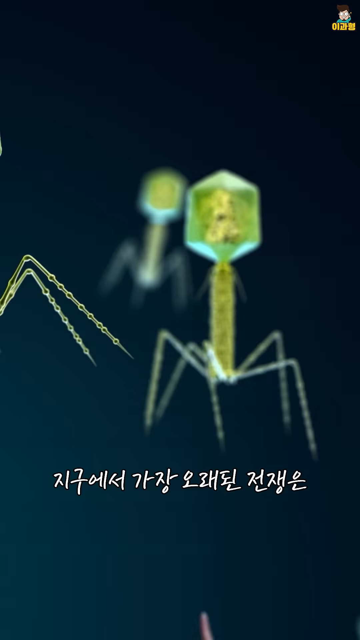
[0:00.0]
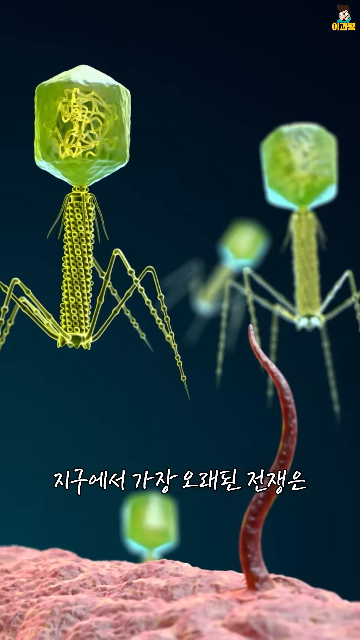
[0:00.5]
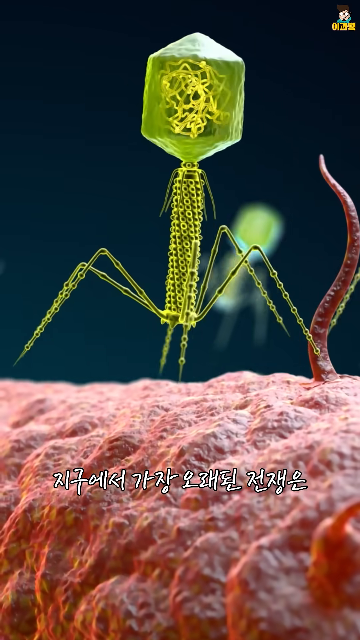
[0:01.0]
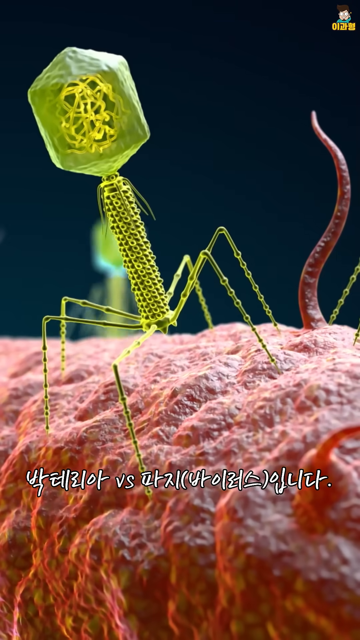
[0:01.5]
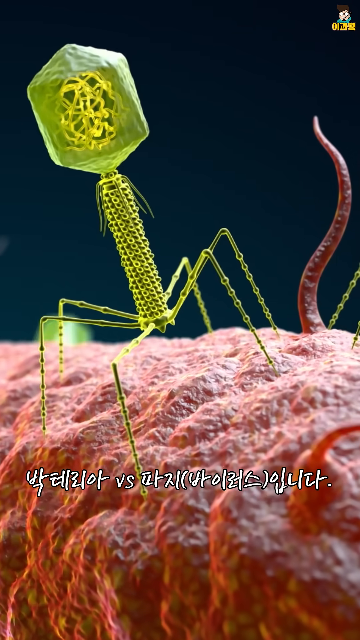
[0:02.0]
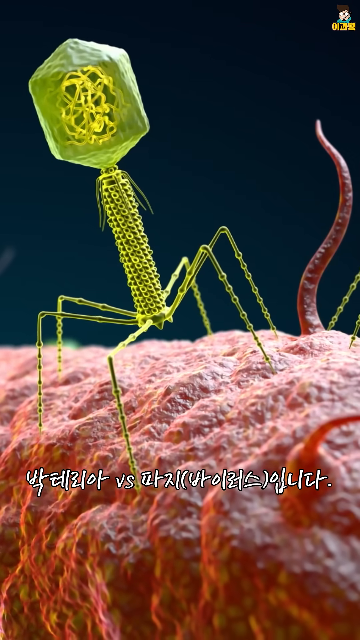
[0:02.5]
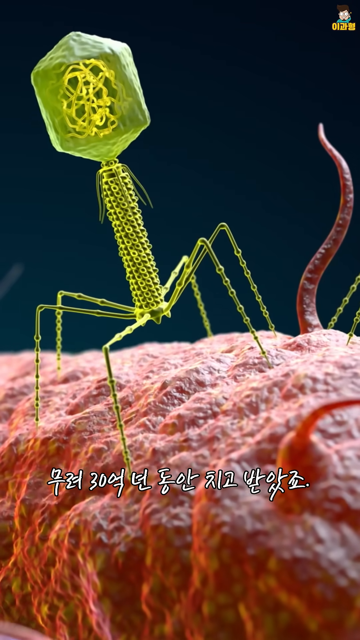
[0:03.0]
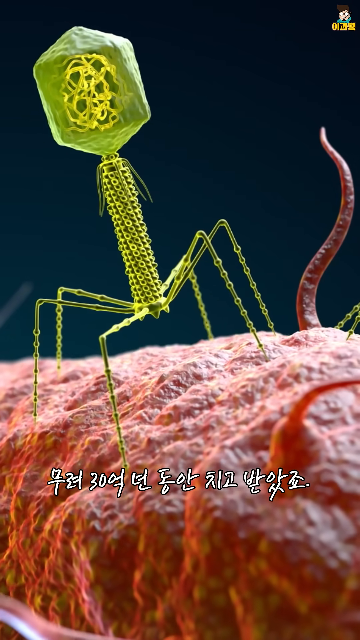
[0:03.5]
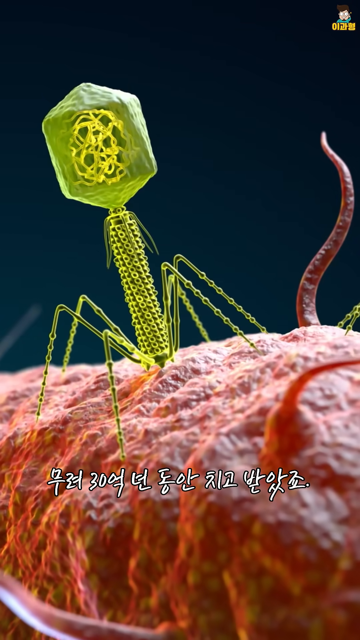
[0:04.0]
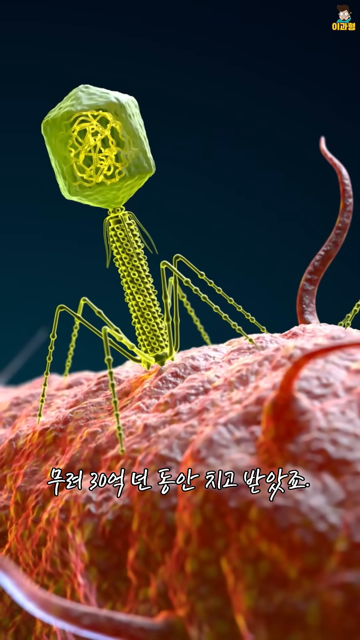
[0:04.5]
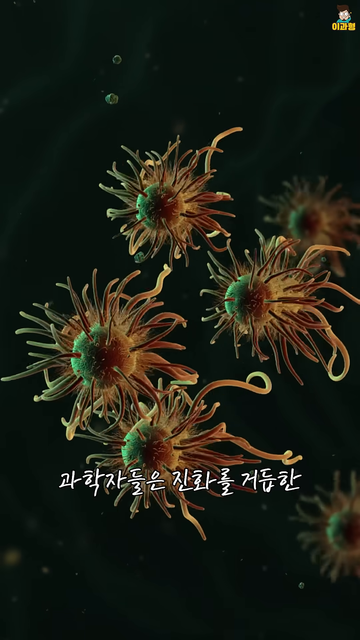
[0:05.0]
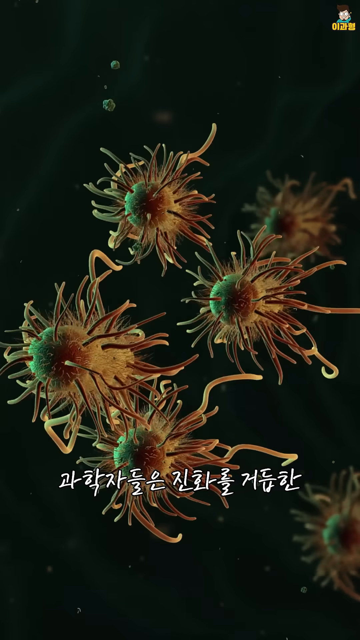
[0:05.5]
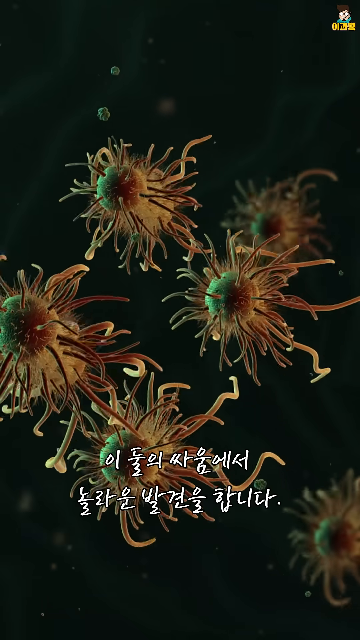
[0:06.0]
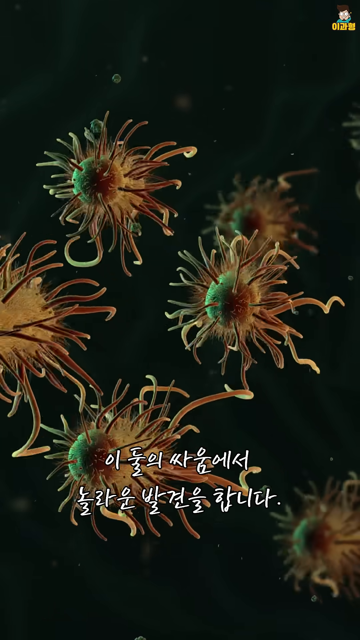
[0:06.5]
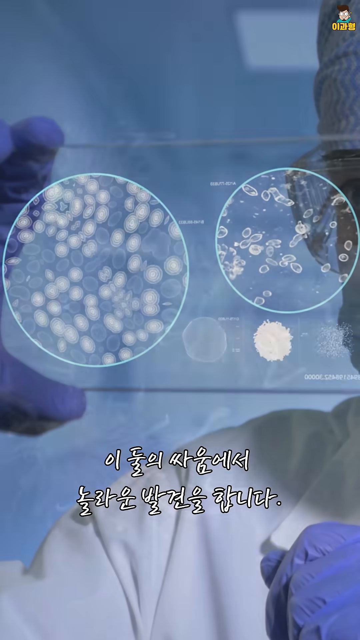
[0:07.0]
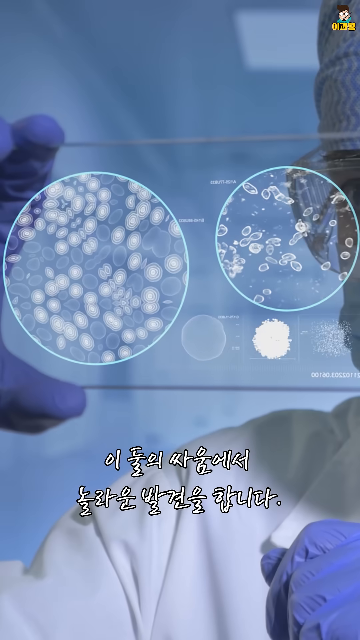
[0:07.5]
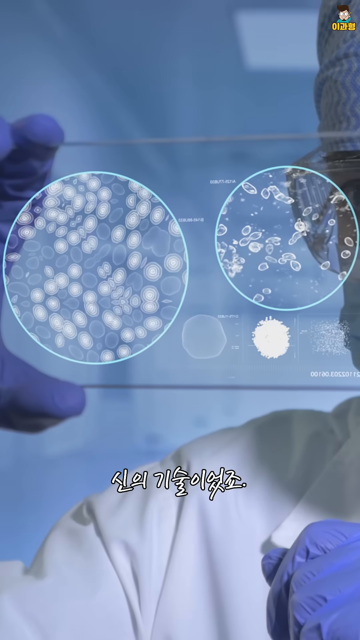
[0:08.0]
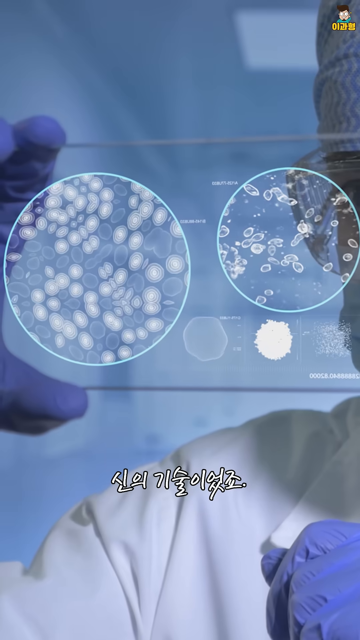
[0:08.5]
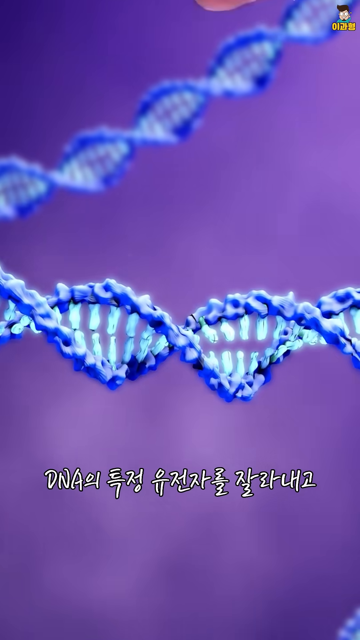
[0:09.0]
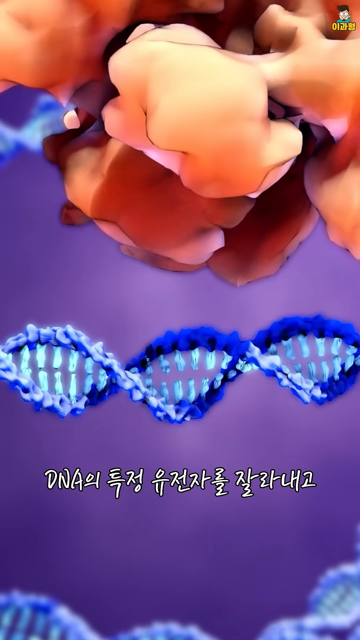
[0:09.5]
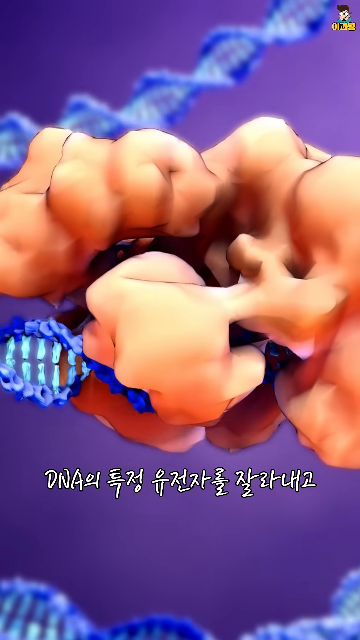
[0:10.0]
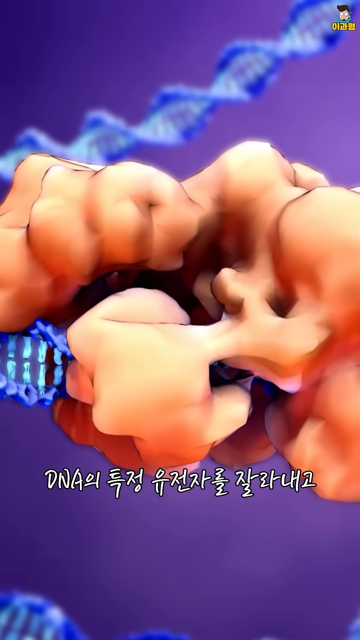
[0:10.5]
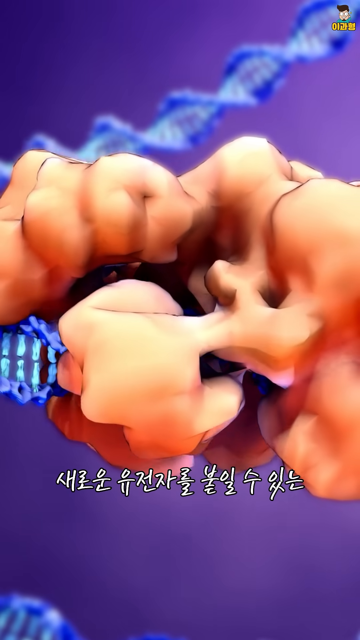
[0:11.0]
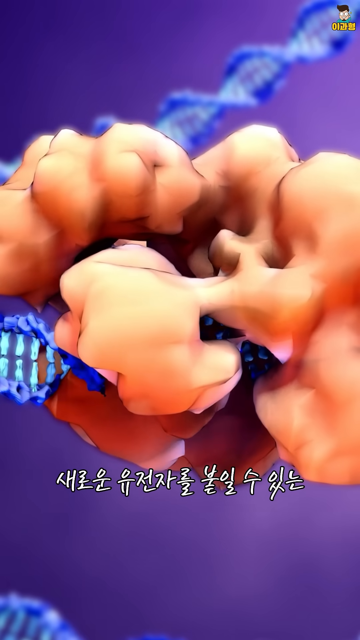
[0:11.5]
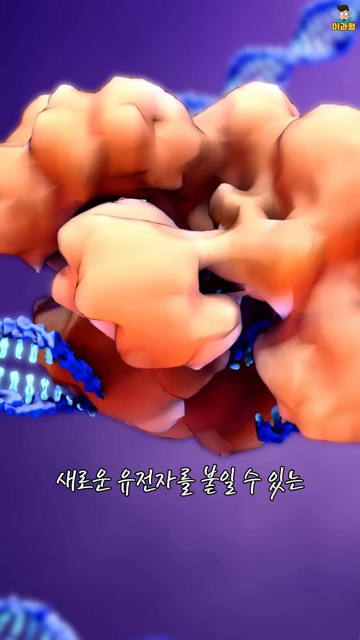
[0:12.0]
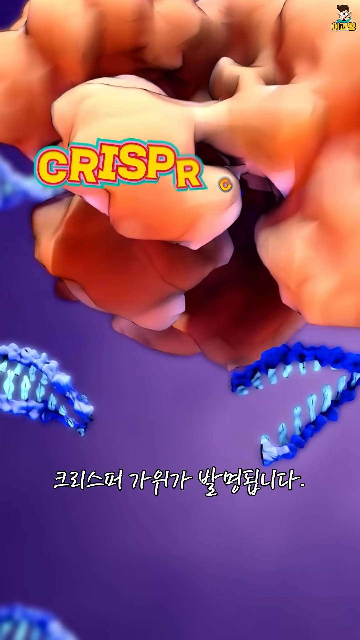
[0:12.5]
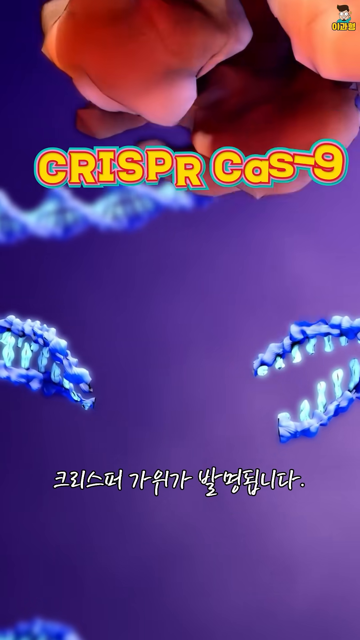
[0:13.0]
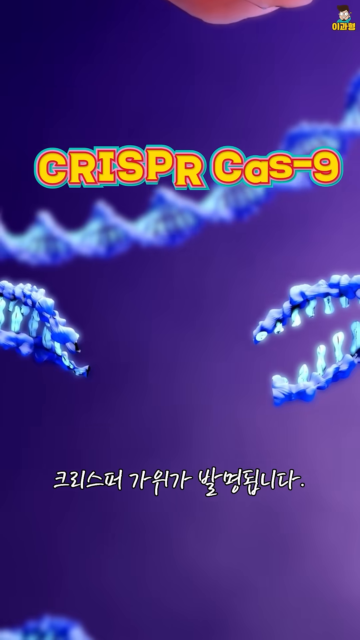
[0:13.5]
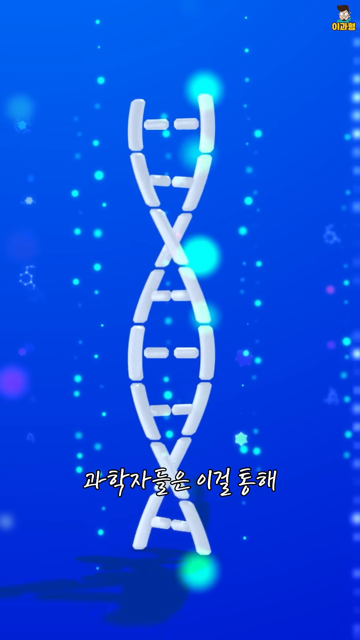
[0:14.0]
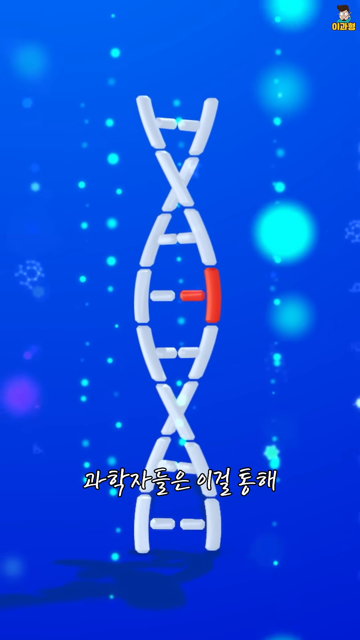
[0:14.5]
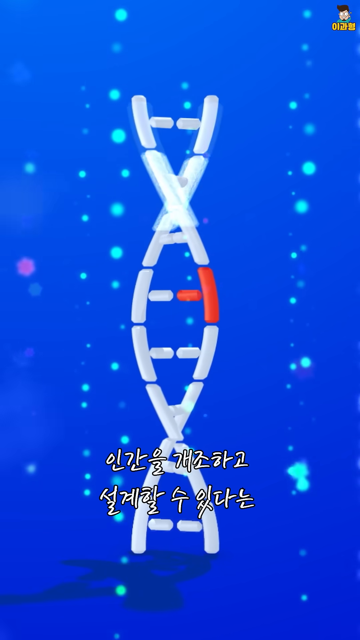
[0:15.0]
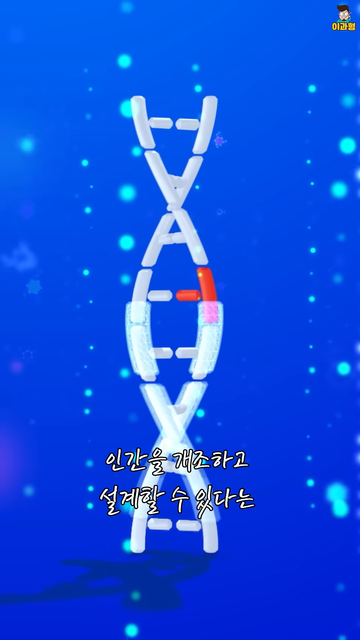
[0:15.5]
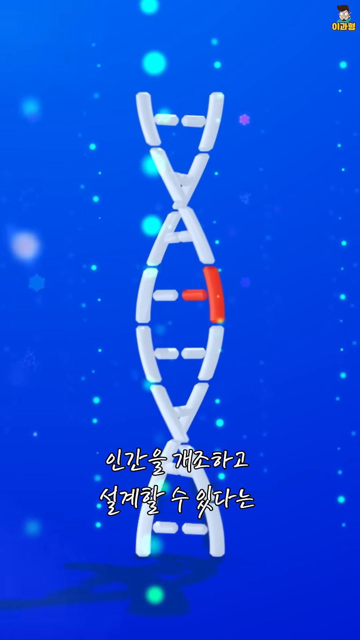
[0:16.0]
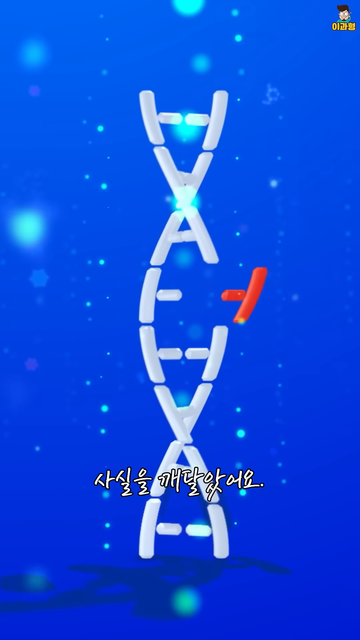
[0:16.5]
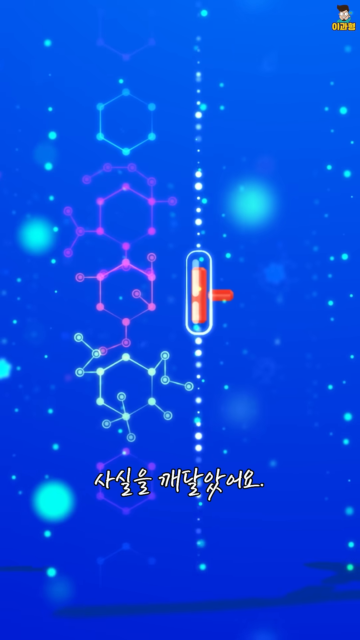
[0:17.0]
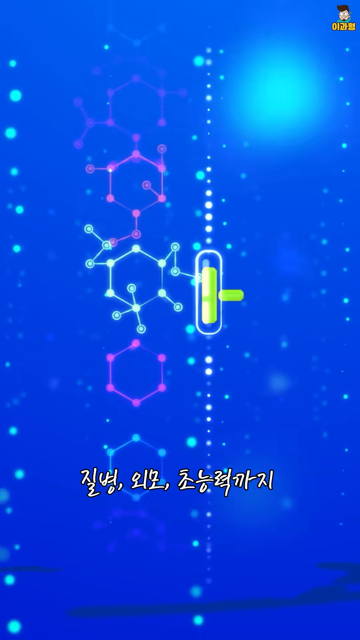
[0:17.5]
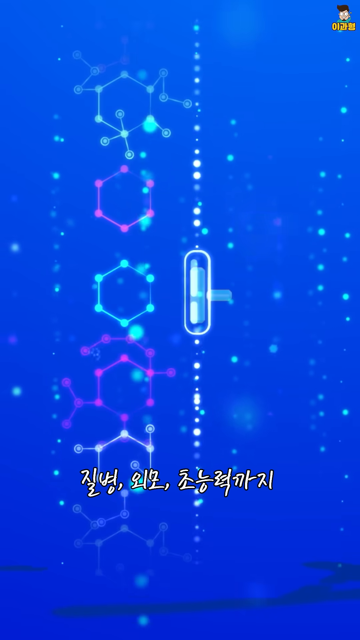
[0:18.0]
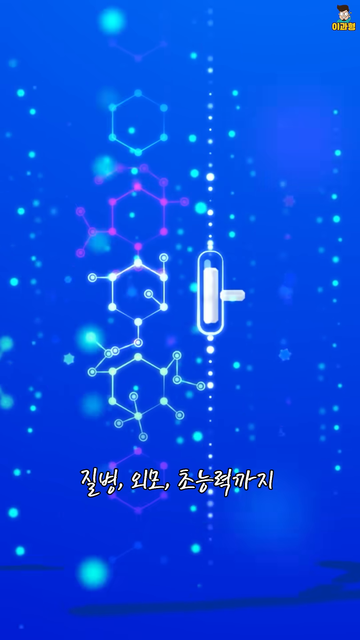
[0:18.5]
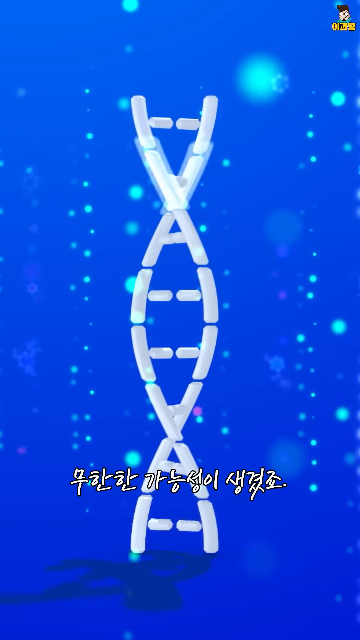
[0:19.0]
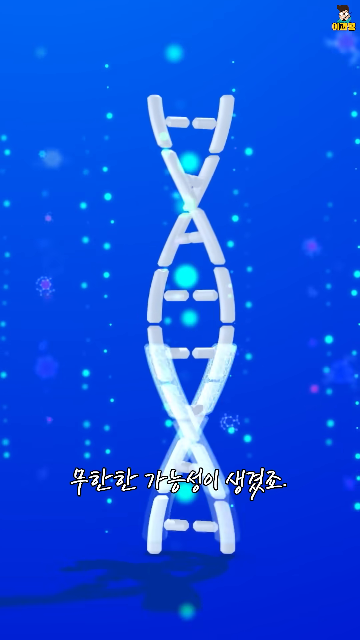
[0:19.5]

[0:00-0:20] The video appears to be about bacteria. At the very beginning, subtitles refer to the oldest thing on earth being bacteria. An illustration of different bacteria is shown, and some of the words on the screen are in a different language. At first the bacteria looks like a bug, and then the video shows different things that look like they are swimming inside the body. A quick shot shows somebody holding an item, apparently a scientist, followed by what looks like DNA strands. In the bottom corner there is a subscribe button with a little cartoon character of a boy with glasses.